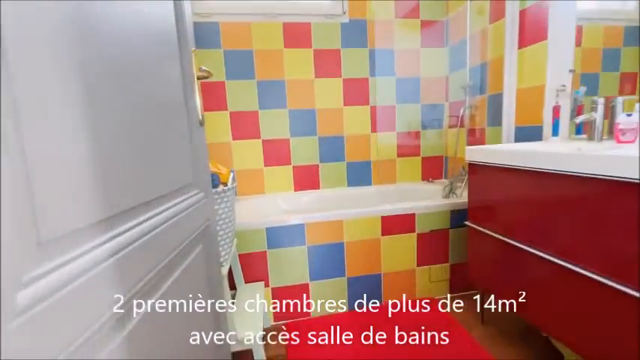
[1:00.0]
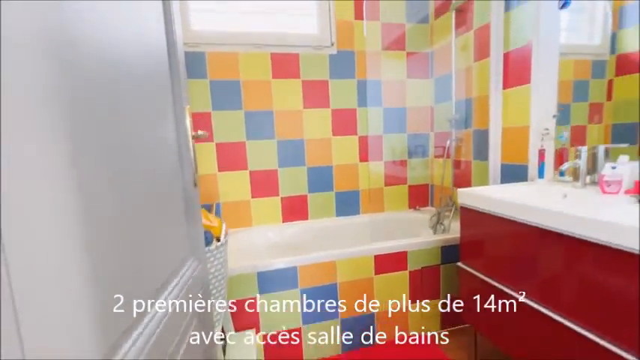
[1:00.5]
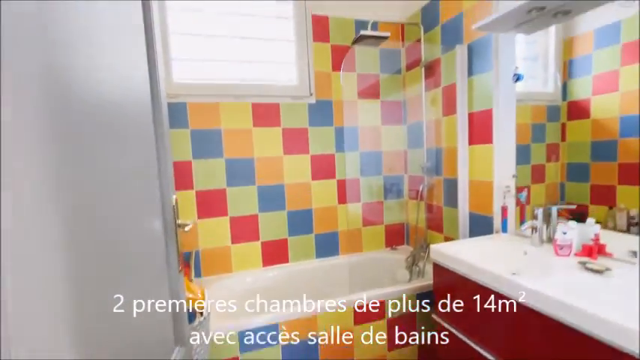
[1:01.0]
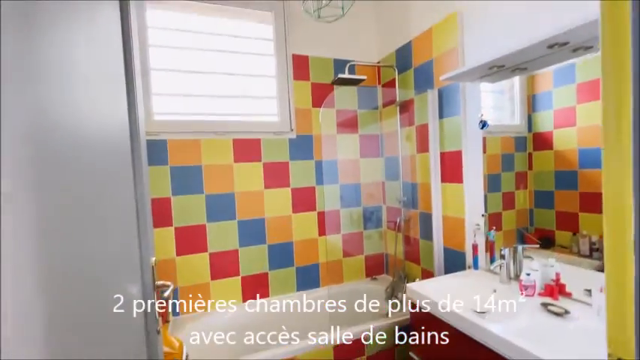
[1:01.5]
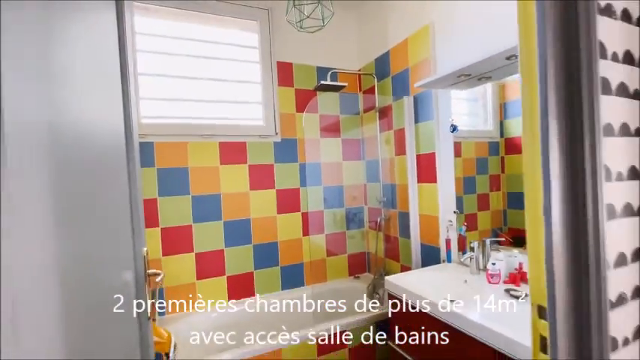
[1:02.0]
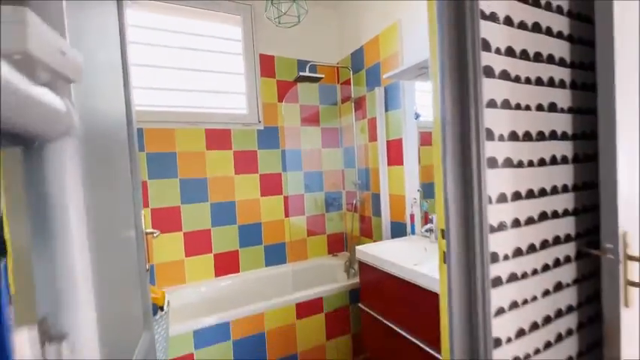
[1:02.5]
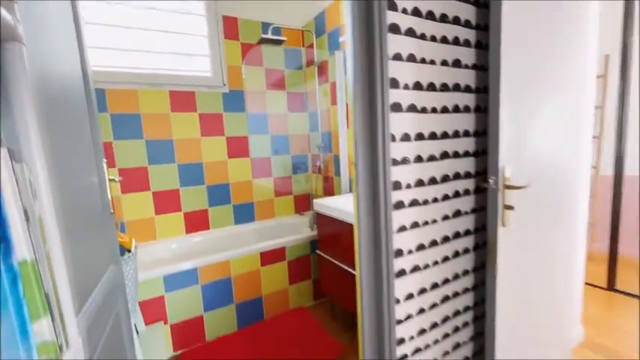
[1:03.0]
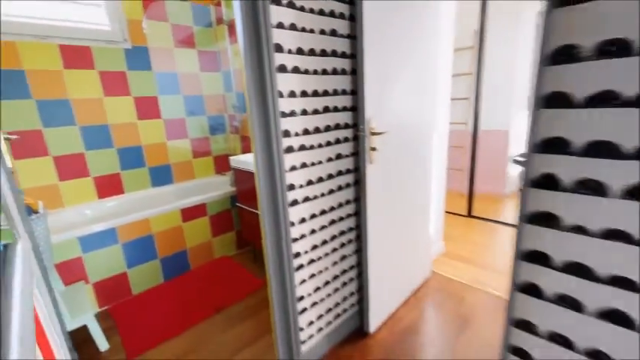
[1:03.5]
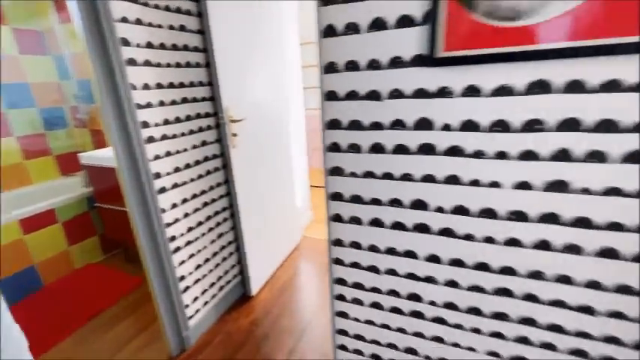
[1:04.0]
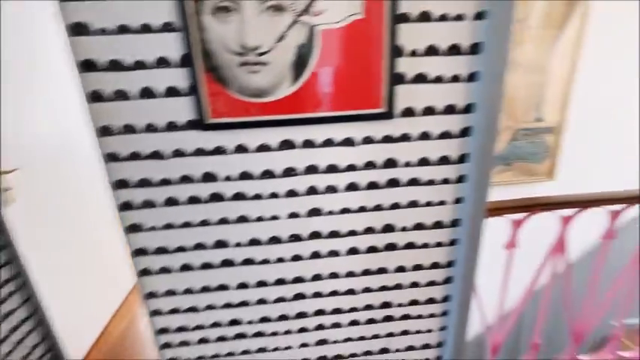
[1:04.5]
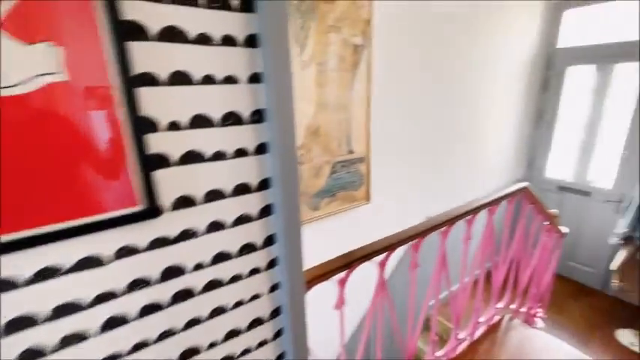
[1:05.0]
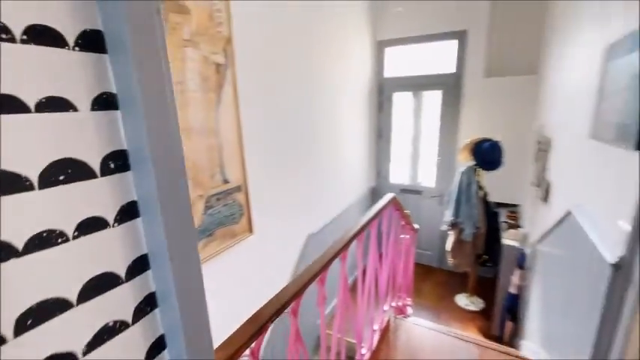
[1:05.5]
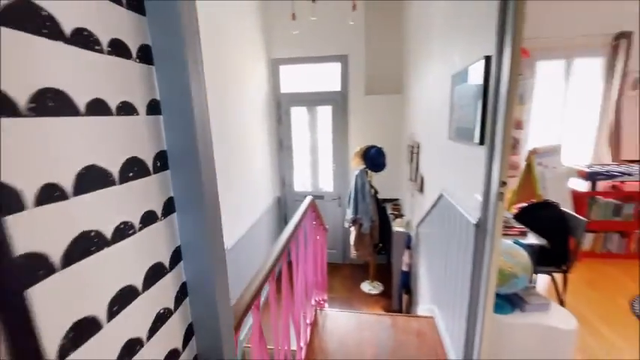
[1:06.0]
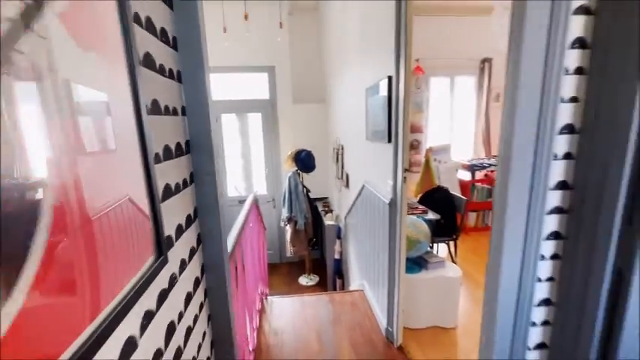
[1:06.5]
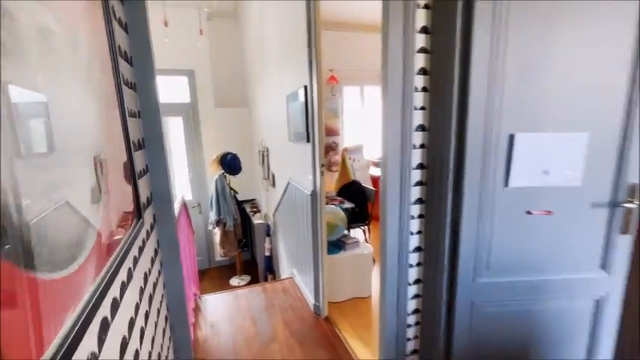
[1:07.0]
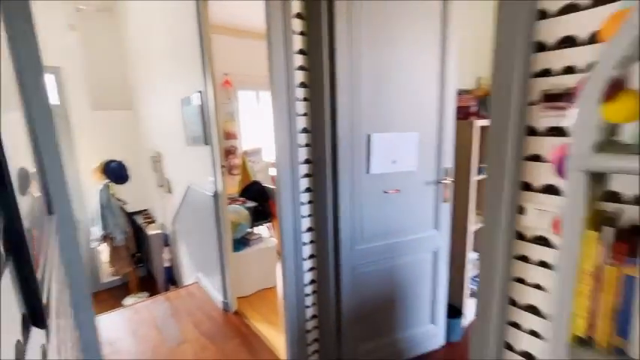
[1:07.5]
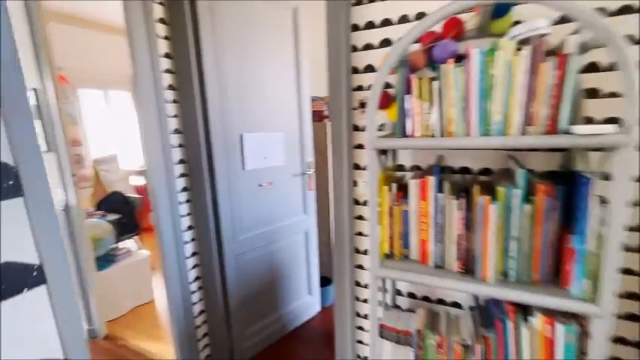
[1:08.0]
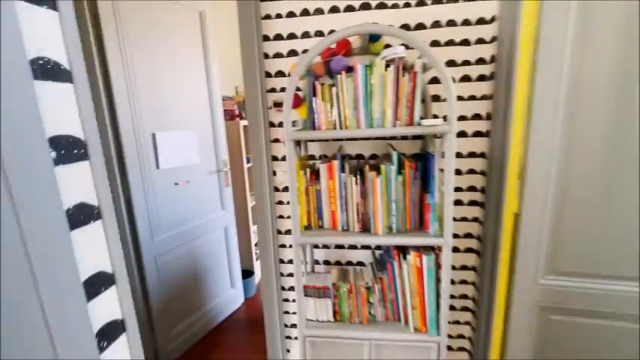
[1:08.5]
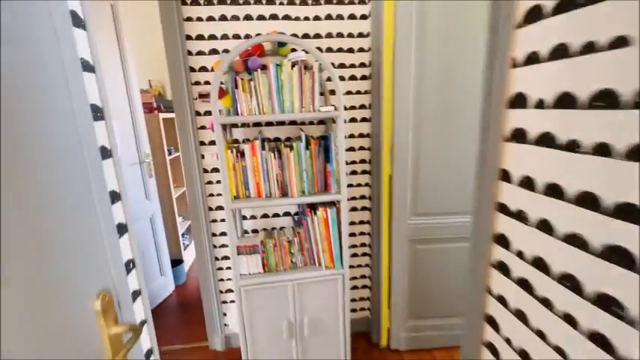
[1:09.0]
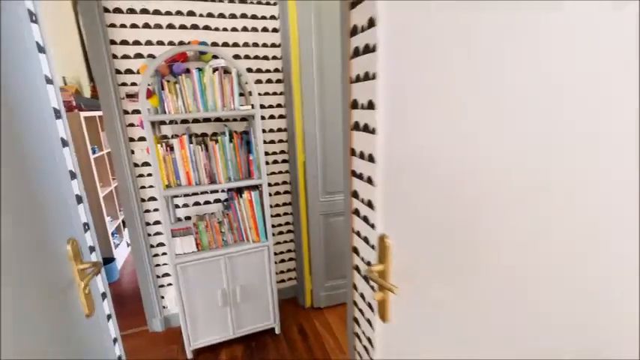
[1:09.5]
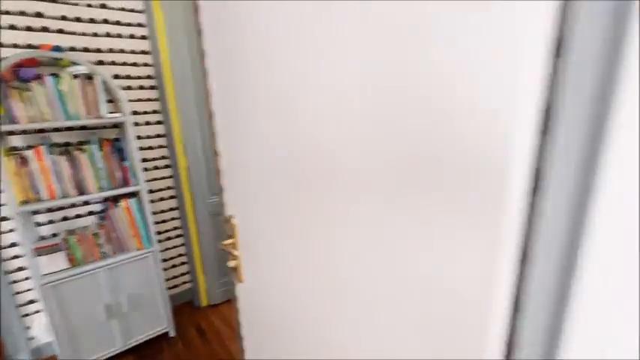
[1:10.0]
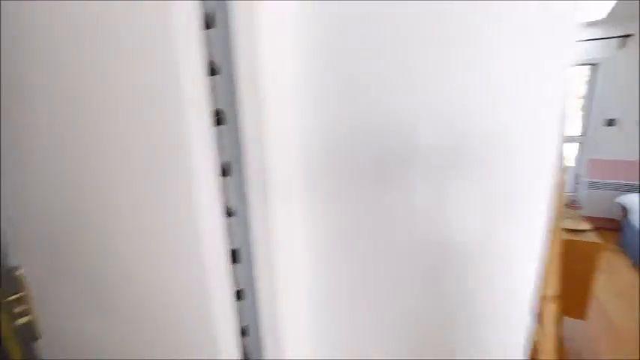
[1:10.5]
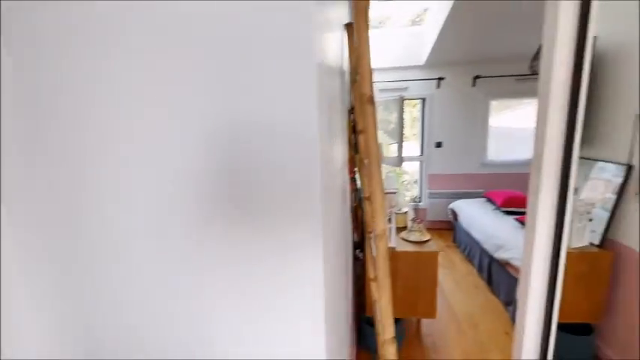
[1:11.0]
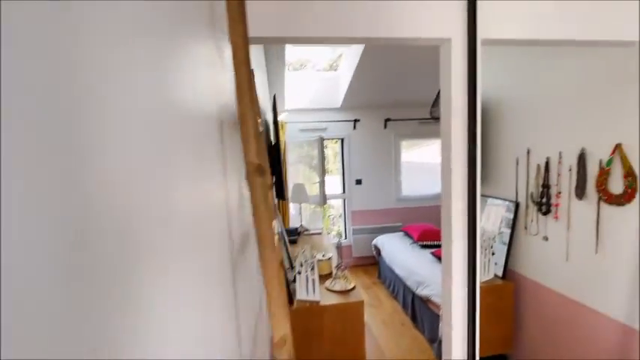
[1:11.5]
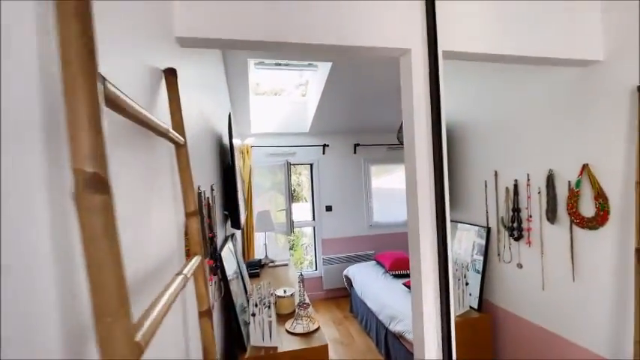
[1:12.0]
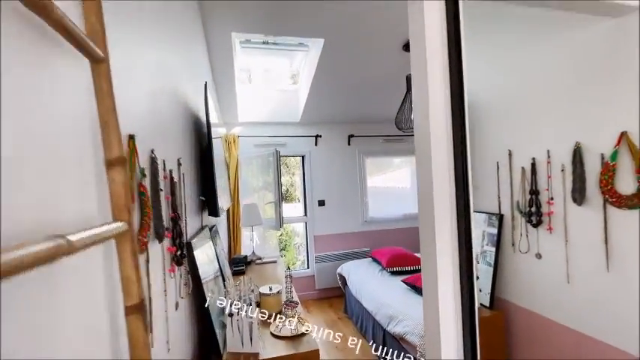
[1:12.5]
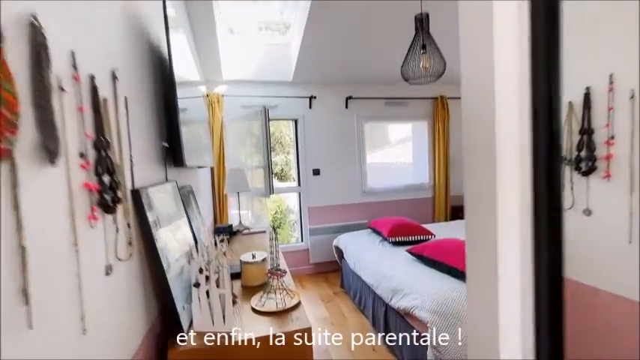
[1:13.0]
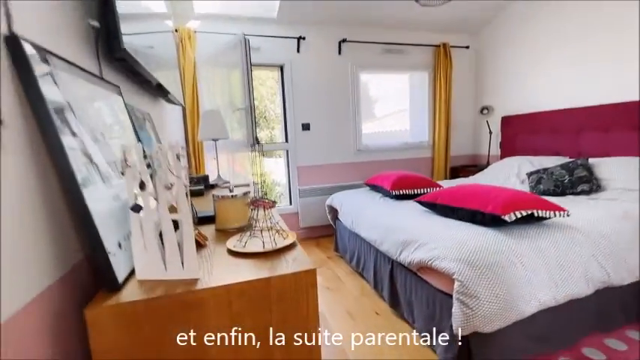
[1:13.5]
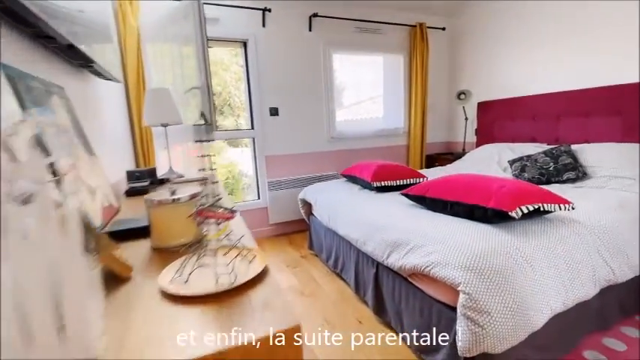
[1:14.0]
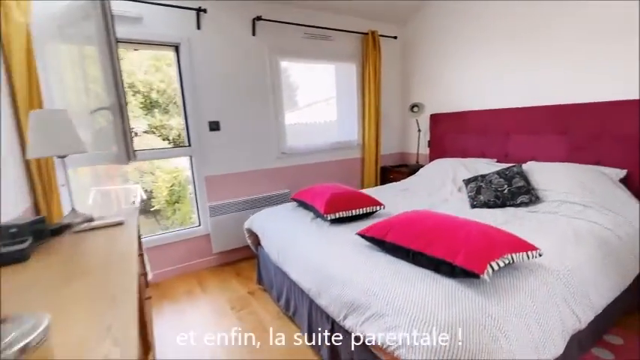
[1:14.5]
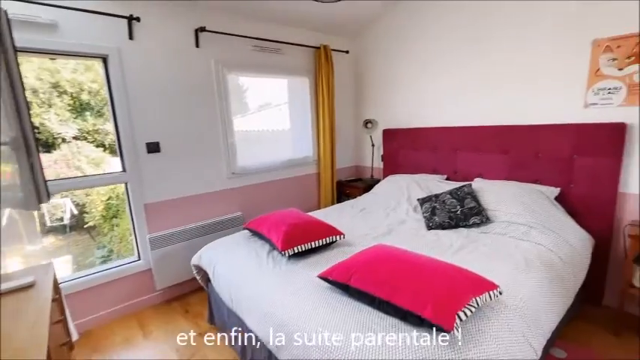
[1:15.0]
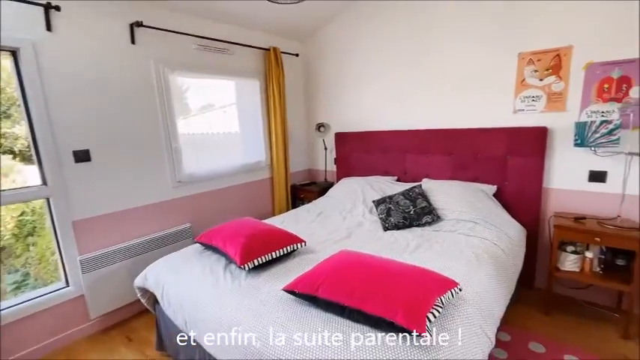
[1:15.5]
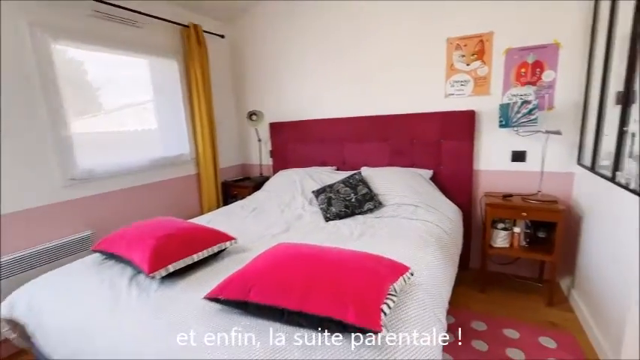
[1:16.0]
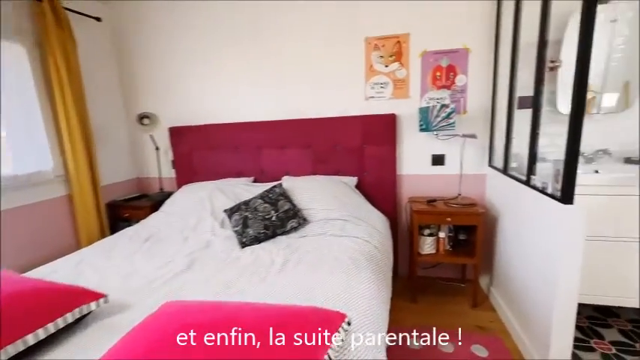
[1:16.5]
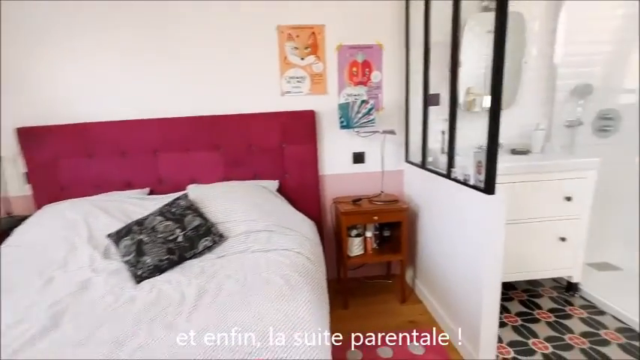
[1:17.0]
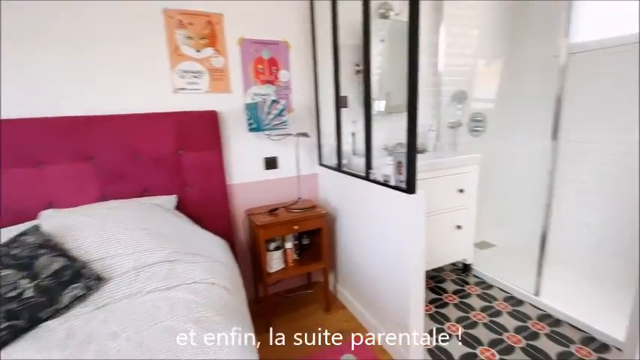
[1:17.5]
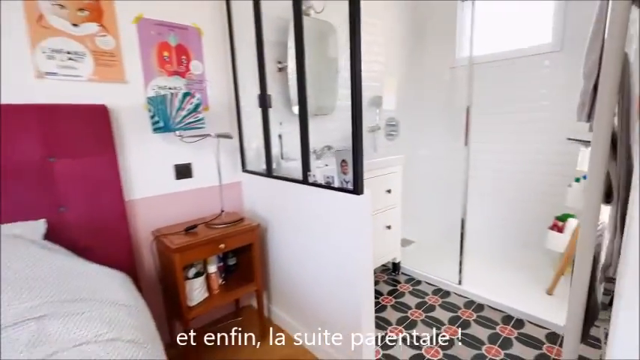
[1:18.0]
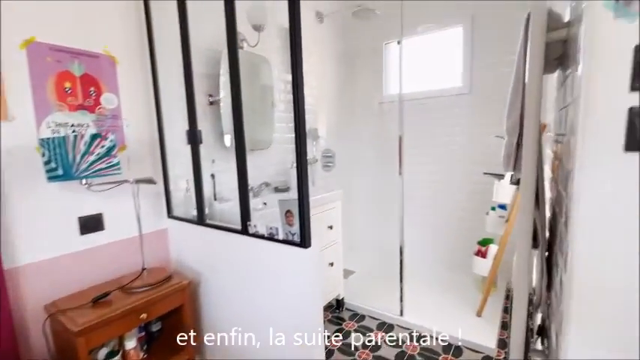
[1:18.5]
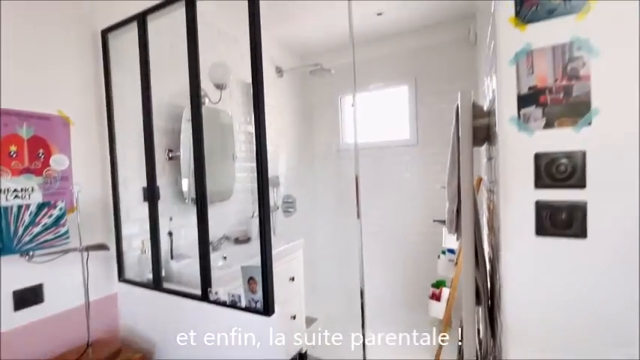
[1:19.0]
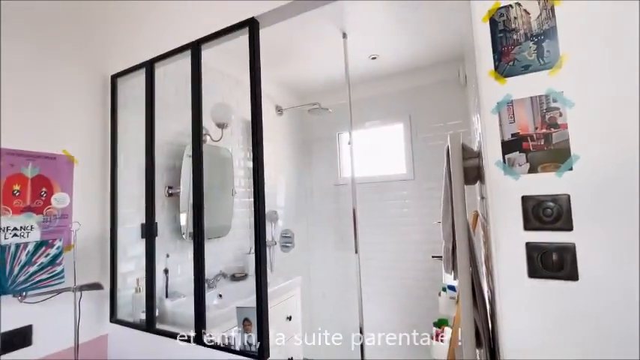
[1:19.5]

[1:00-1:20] The camera passes by what appears to be a bathroom, turns right all the way around, and then backs up around the left corner into the next room. It curves right, and in front there is a small desk with knickknacks and what appears to be a picture on top of it. To the right of that is a bed with white and blue sheets, a couple of pillows at the foot of the bed, another two pillows at the top of the bed, and a loose pillow between them. The camera turns right to show the head of the bed with a nightstand next to it. There are a couple of posters on the wall. It then turns right to show what appears to be a bathroom with a shower and a sink with drawers beneath. A small, long rectangular window is above the shower.